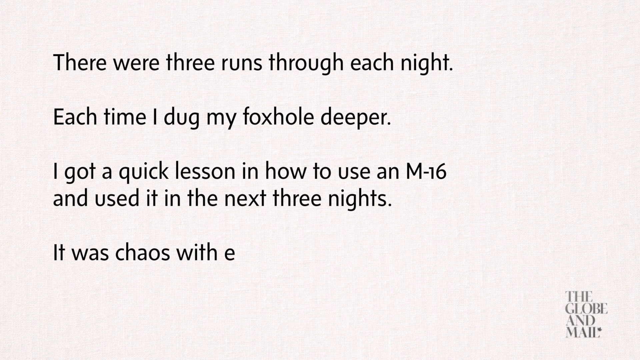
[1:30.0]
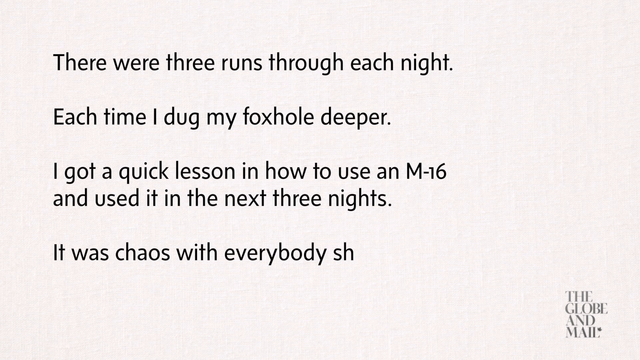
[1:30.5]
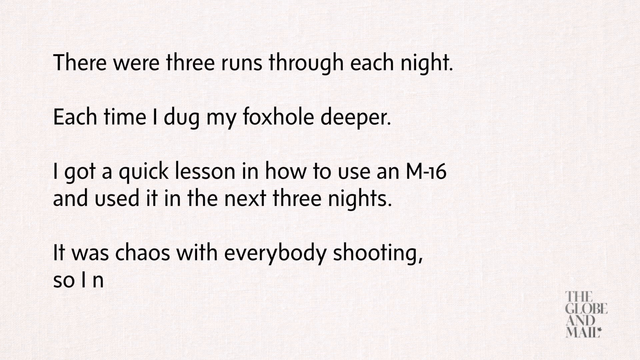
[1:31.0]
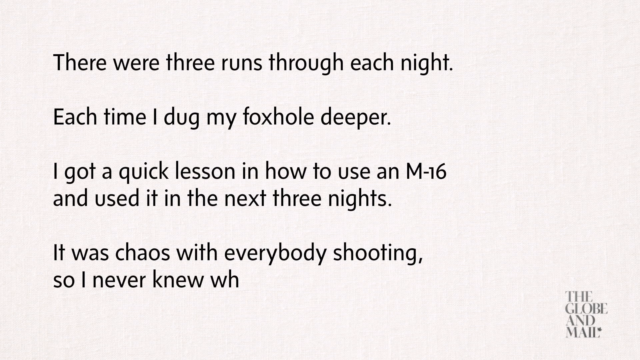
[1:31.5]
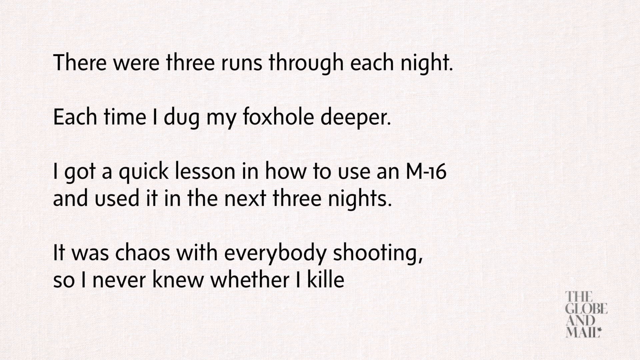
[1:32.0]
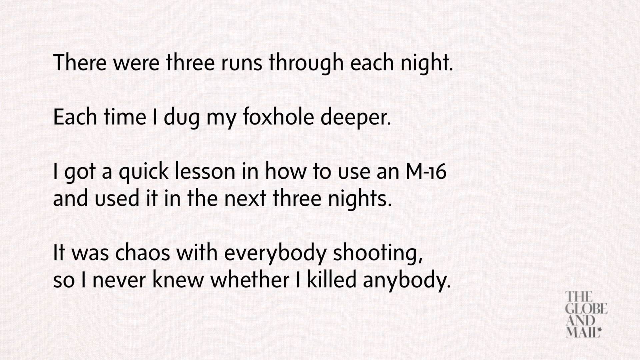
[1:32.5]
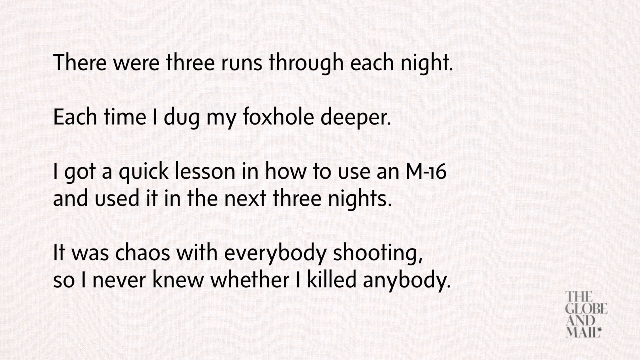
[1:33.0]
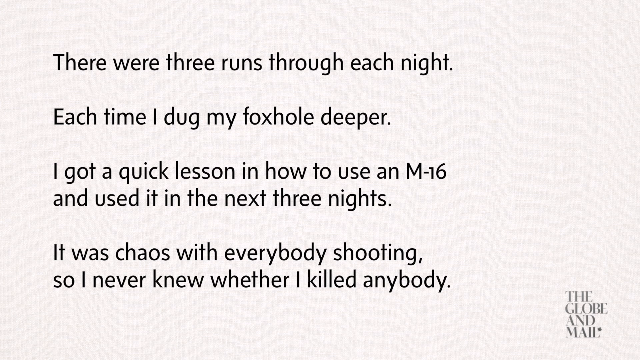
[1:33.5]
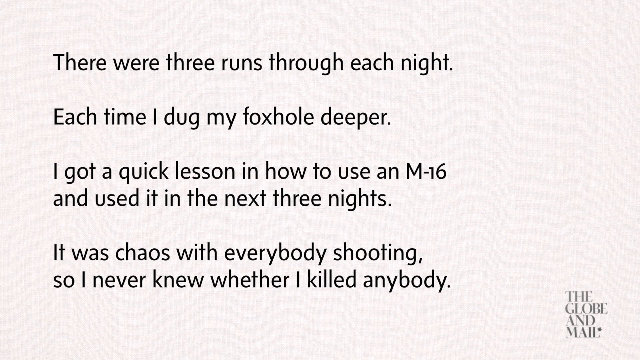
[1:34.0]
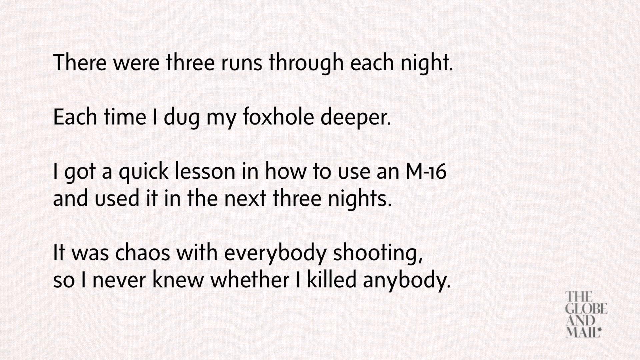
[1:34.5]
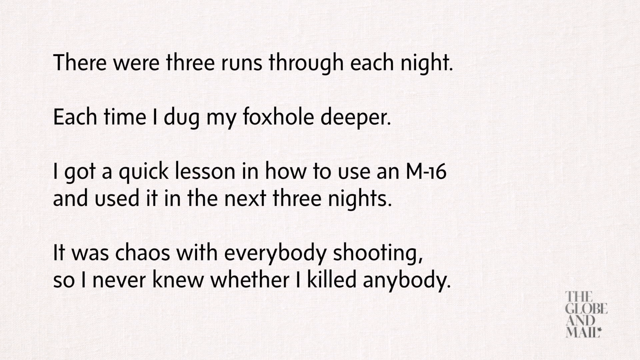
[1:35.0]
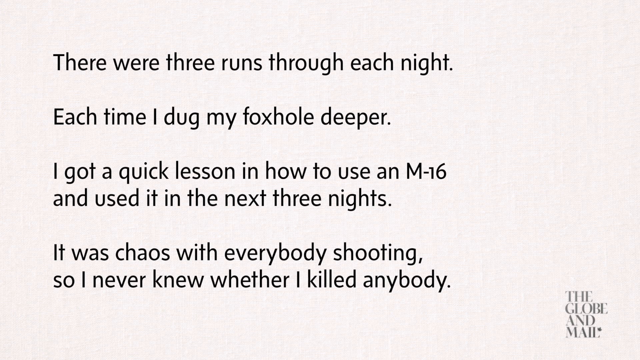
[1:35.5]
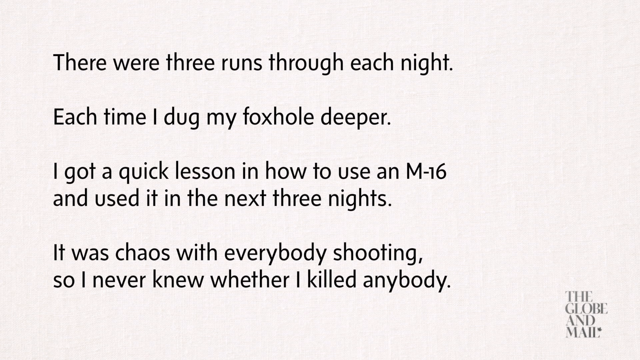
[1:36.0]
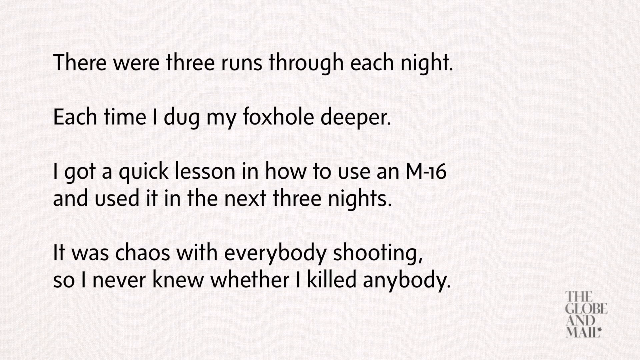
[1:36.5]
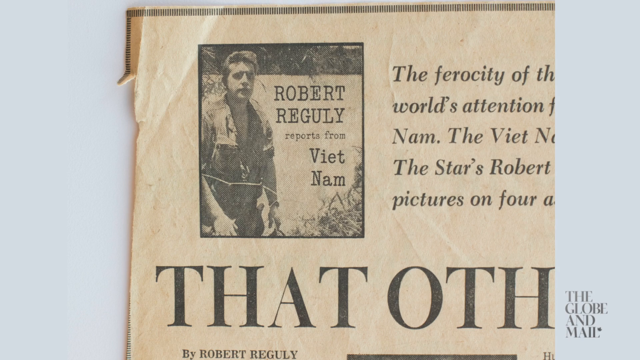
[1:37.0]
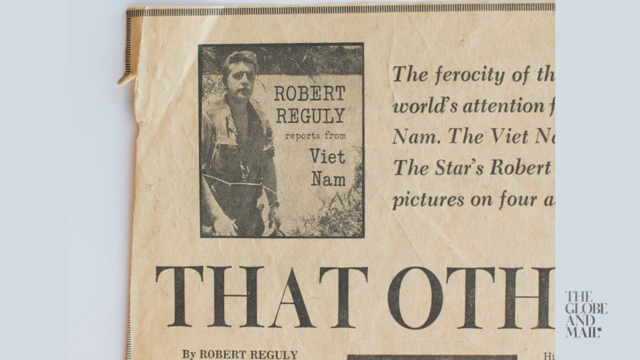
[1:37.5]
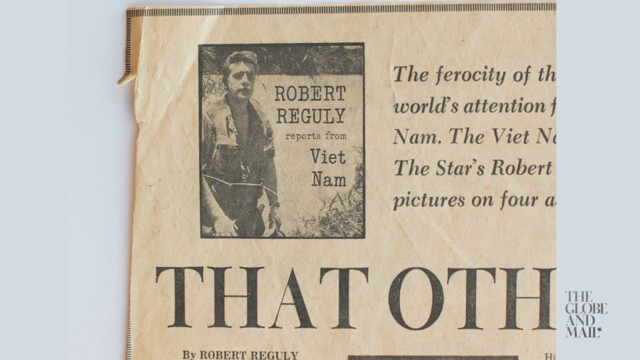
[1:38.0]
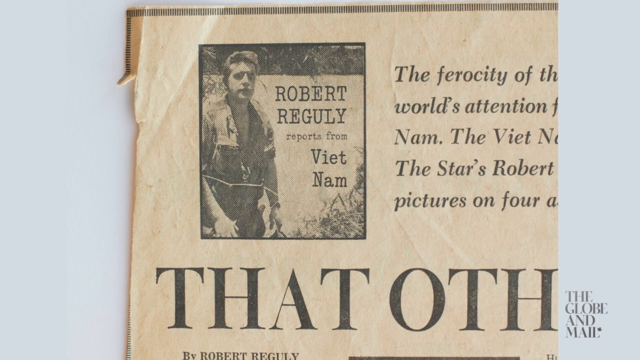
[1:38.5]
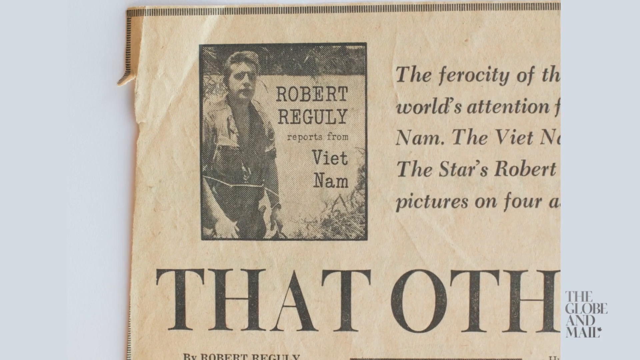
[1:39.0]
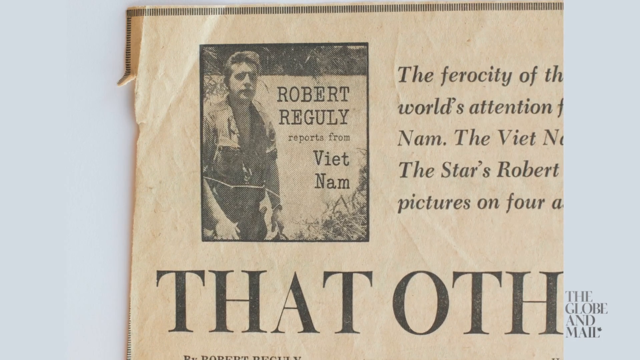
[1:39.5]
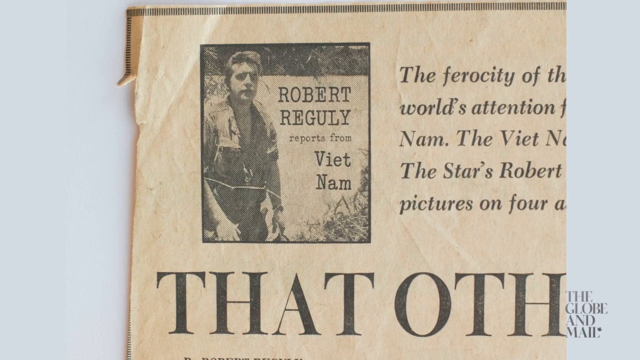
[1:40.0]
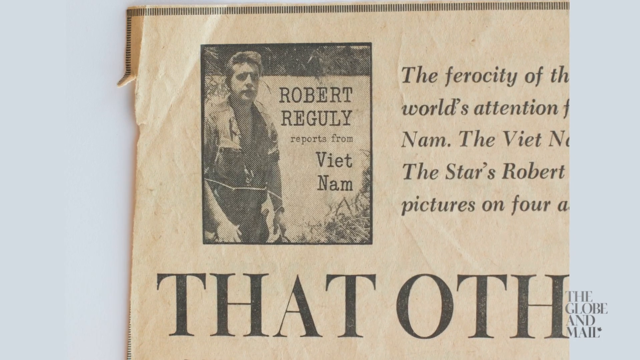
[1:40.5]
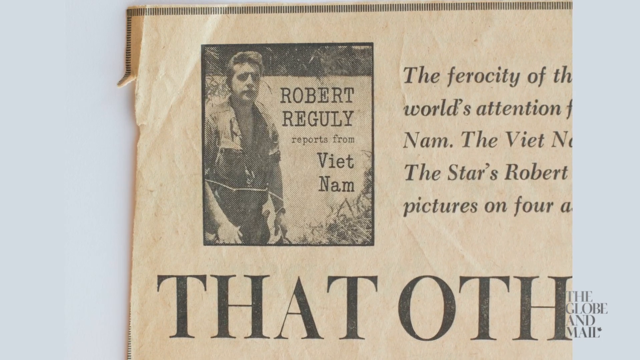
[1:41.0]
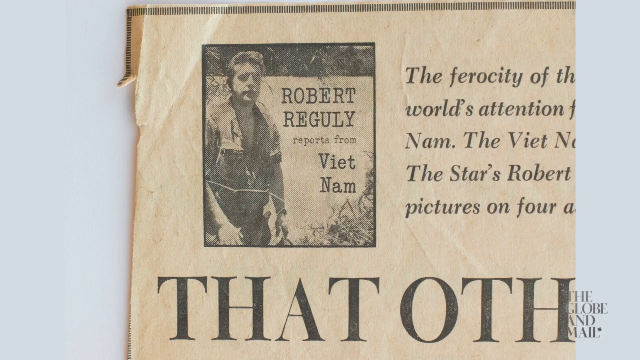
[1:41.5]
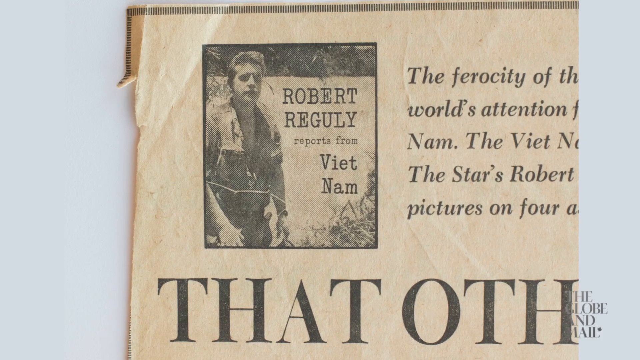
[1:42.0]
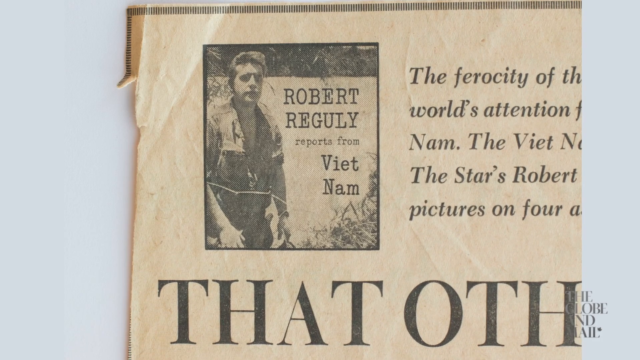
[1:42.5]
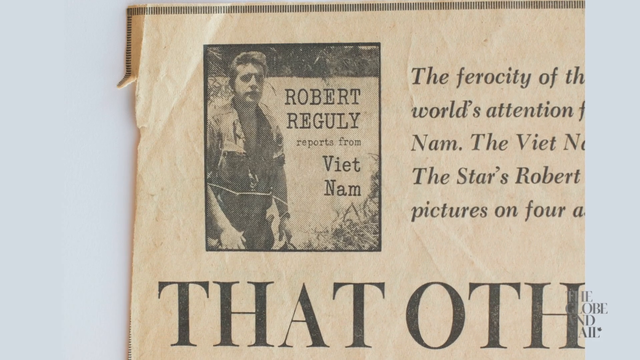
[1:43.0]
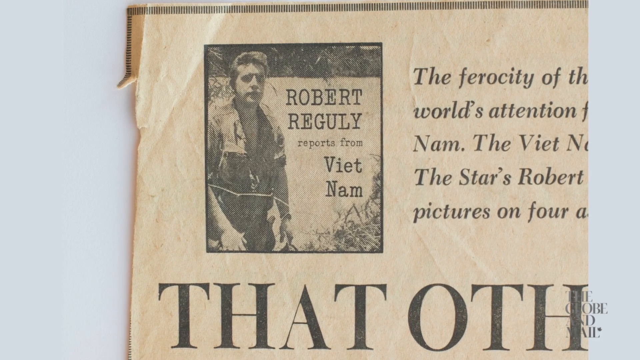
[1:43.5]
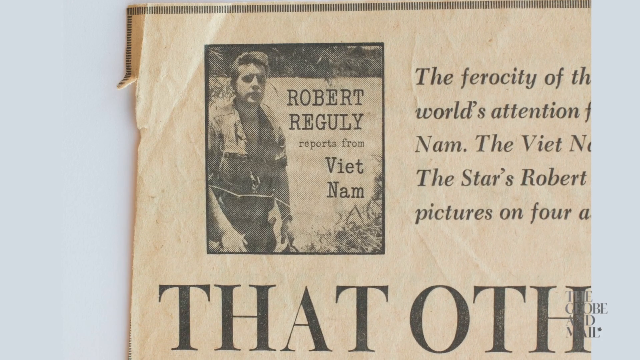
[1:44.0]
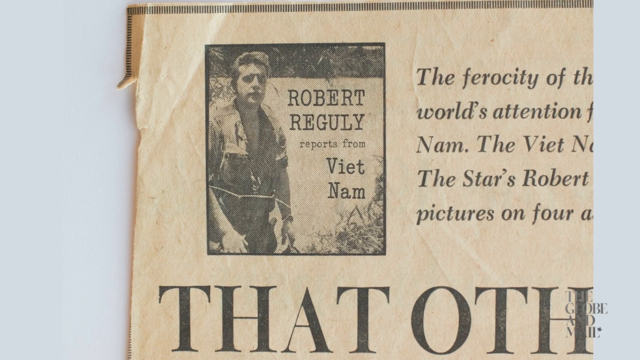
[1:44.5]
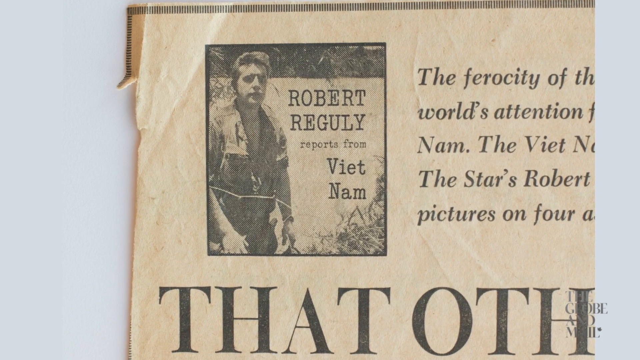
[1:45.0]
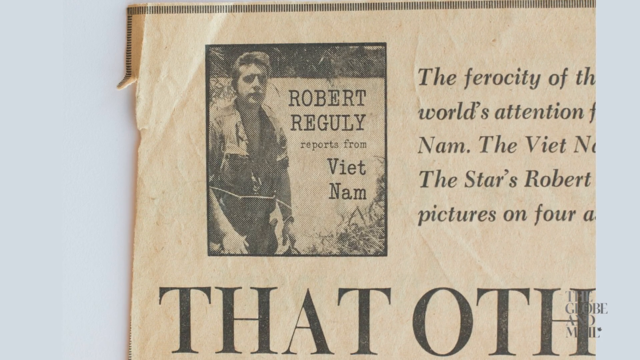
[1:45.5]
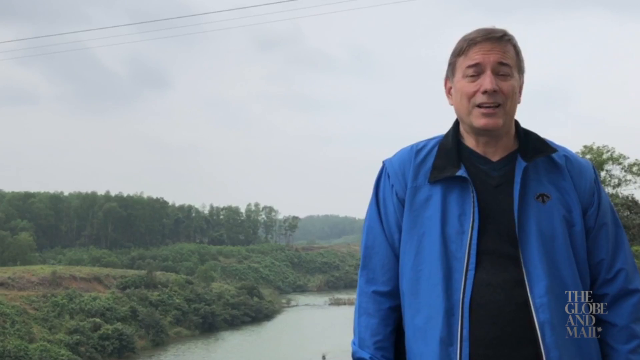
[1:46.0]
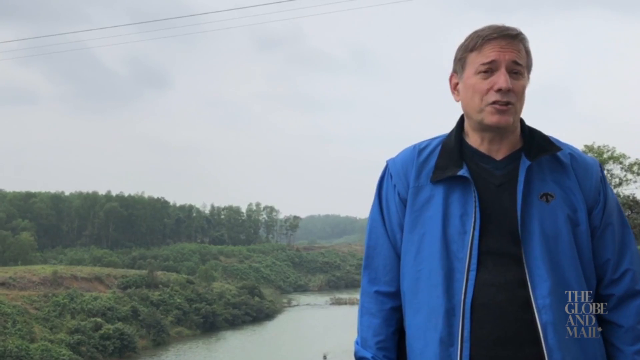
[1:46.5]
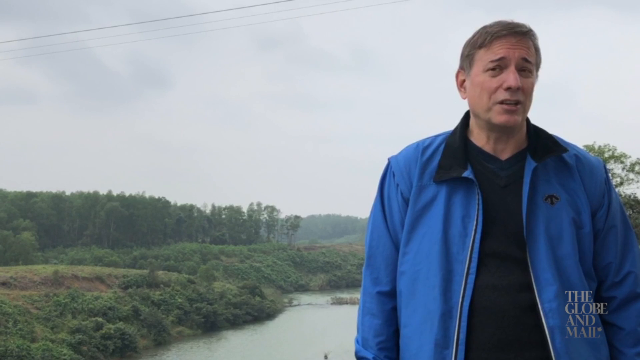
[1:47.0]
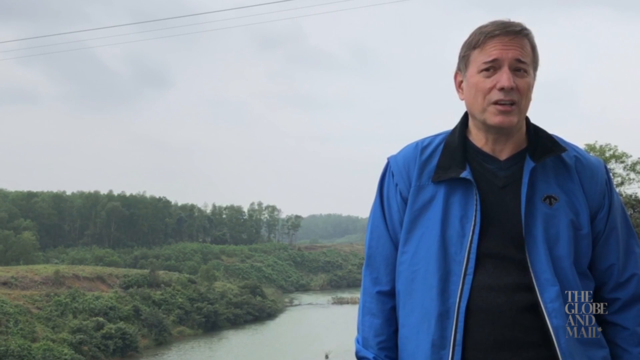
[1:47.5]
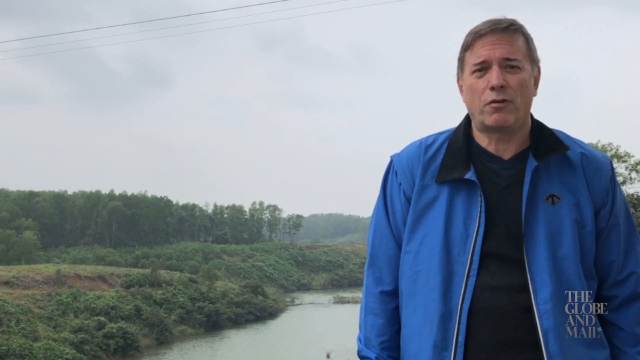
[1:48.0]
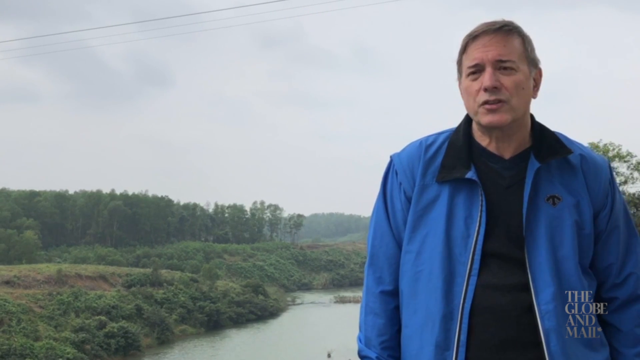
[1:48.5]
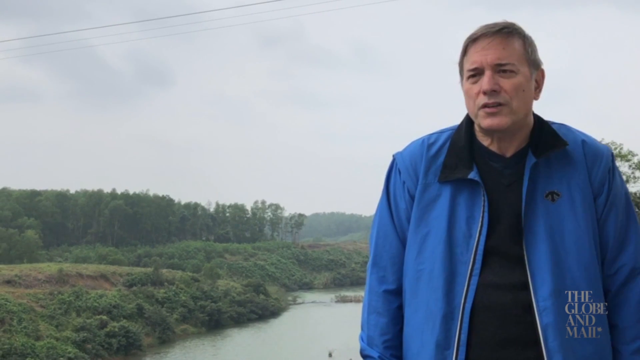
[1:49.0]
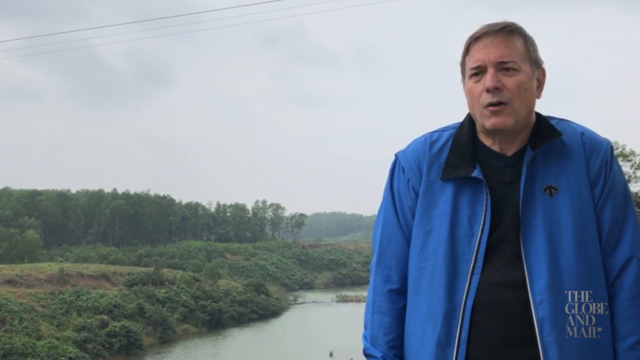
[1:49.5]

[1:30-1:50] The text continues: "with everybody shooting so I never knew whether I killed anybody." The video then shows a section of an old paper with a photo of a man in the corner, again wearing combat fatigues. Next to him, black text reads "Robert Reguly reports from Vietnam". Further text beside it is cut off, beginning "the ferocity of world's attention", and underneath, big black text reads "O-T-H" before being cut off. The shot slowly zooms in towards the picture on the paper. The man in the blue jacket returns; the papers he holds are no longer visible, and he looks directly at the camera as he talks, moving his left shoulder up and down slightly as if making a questioning statement.